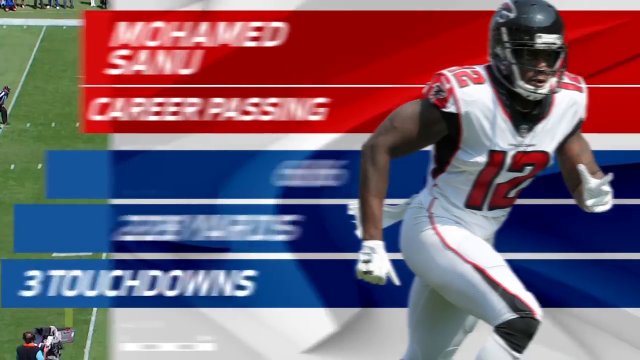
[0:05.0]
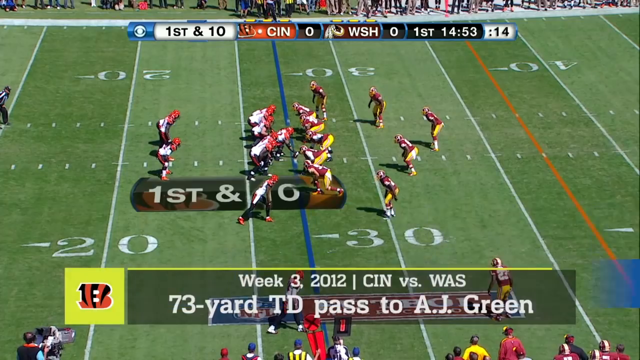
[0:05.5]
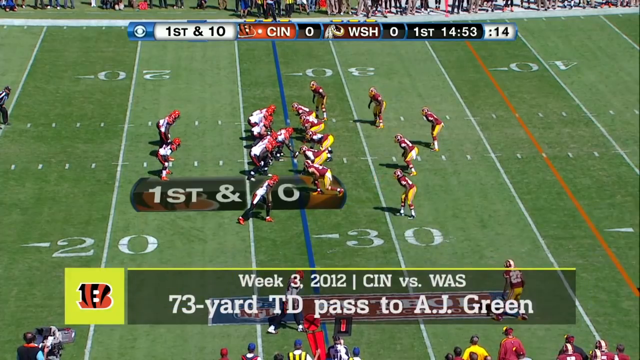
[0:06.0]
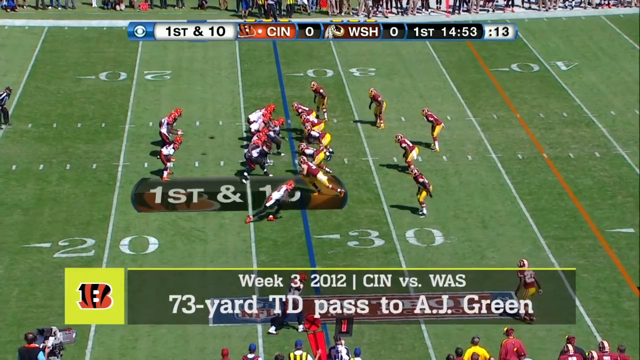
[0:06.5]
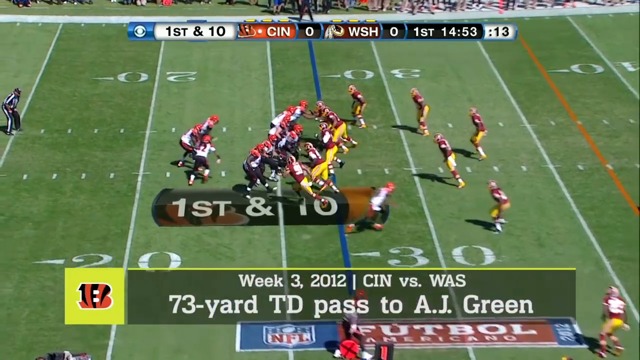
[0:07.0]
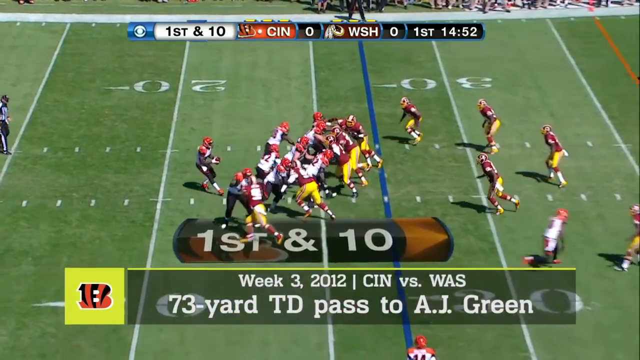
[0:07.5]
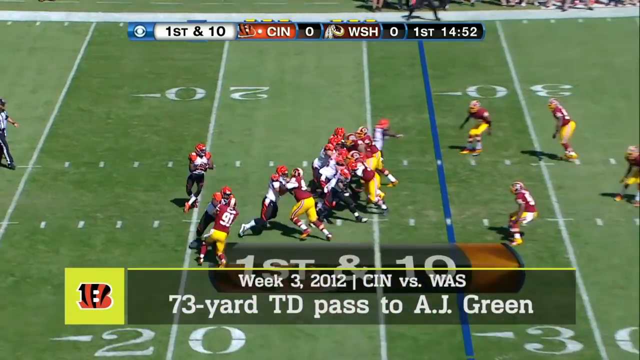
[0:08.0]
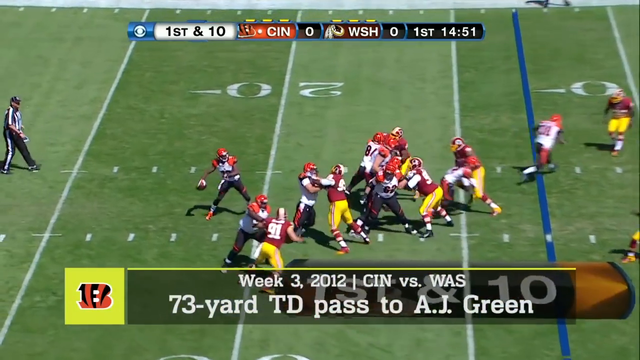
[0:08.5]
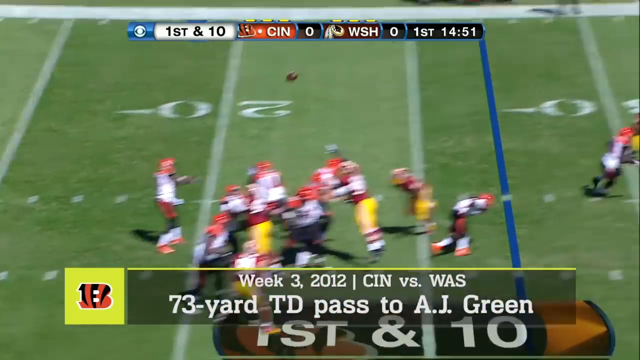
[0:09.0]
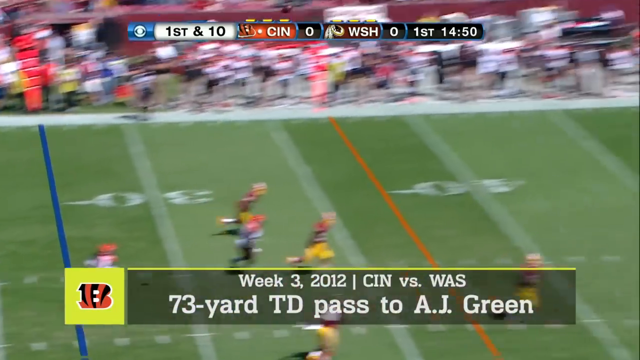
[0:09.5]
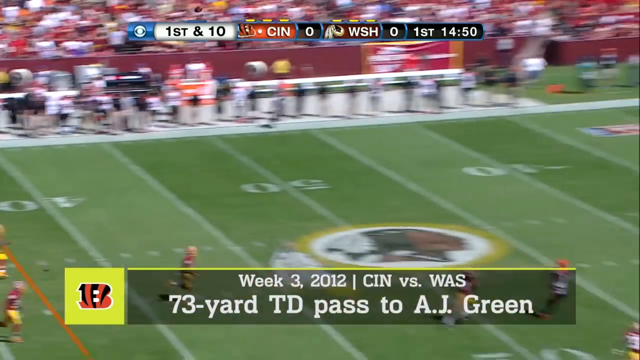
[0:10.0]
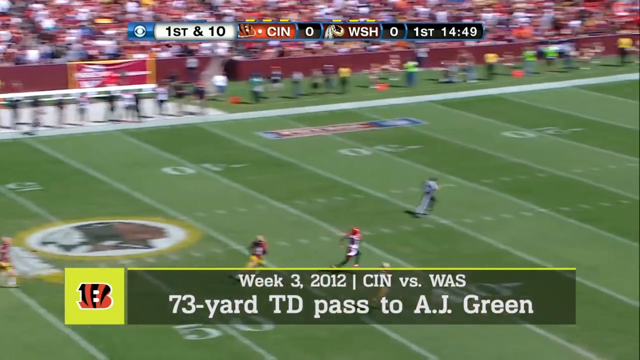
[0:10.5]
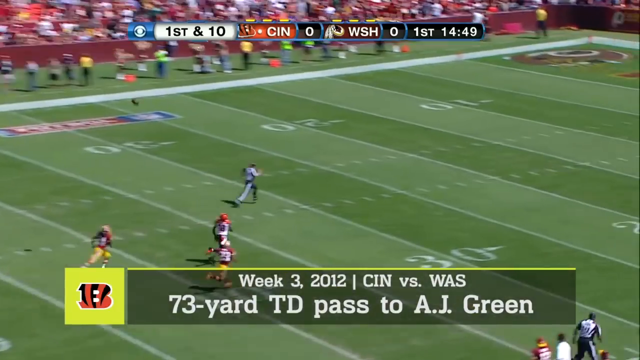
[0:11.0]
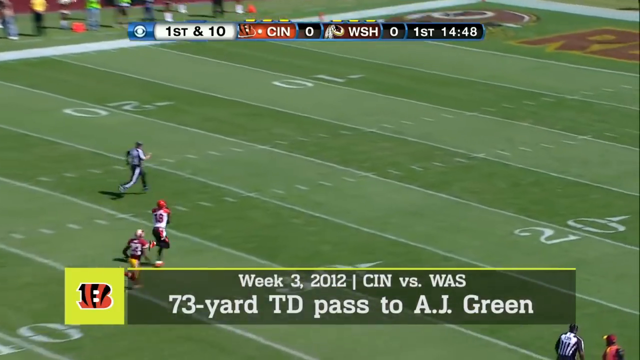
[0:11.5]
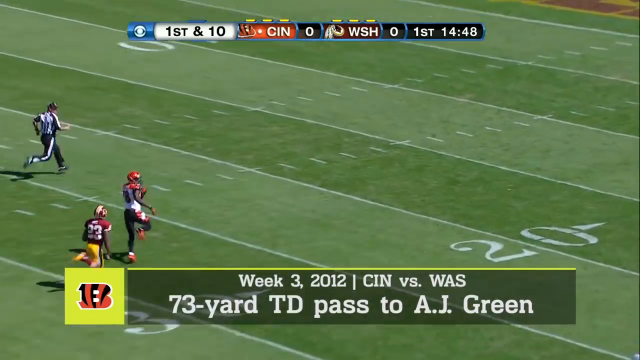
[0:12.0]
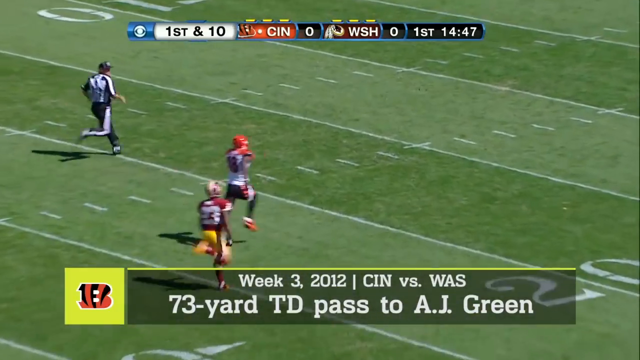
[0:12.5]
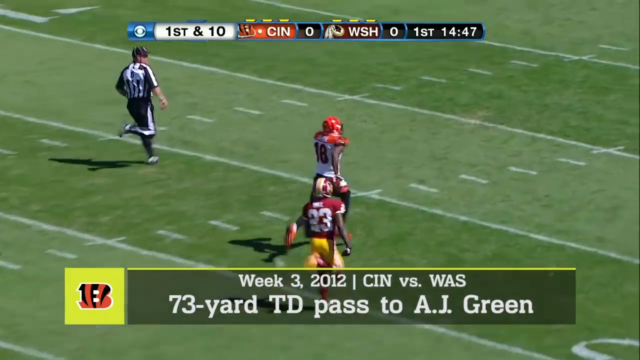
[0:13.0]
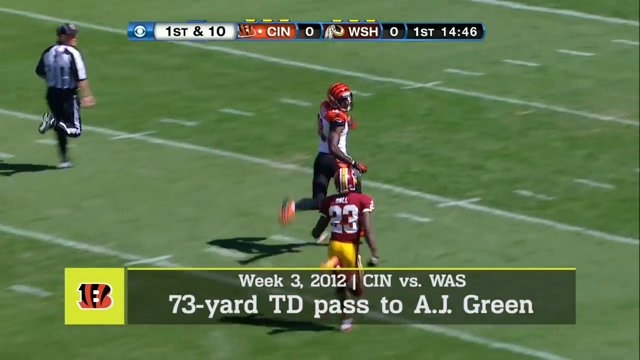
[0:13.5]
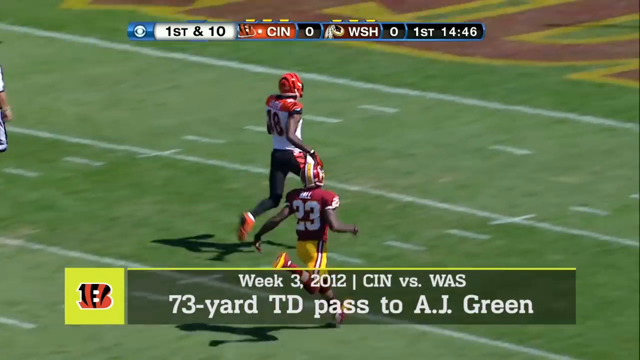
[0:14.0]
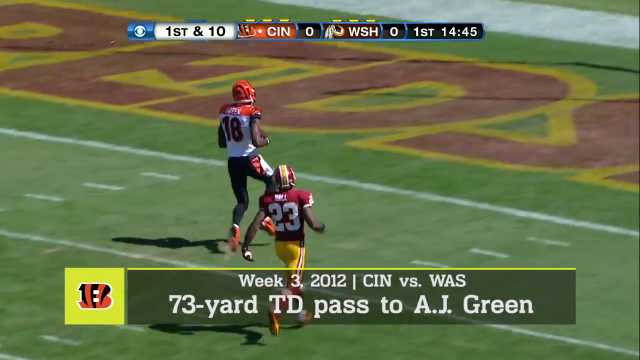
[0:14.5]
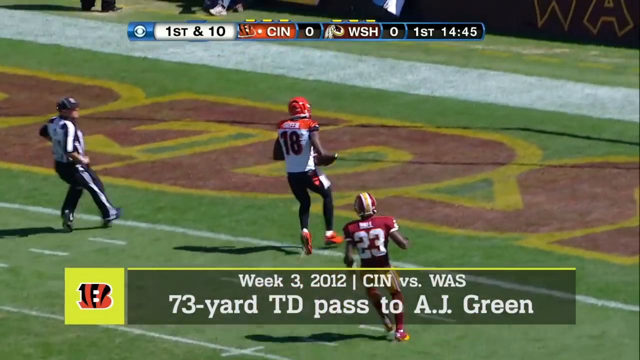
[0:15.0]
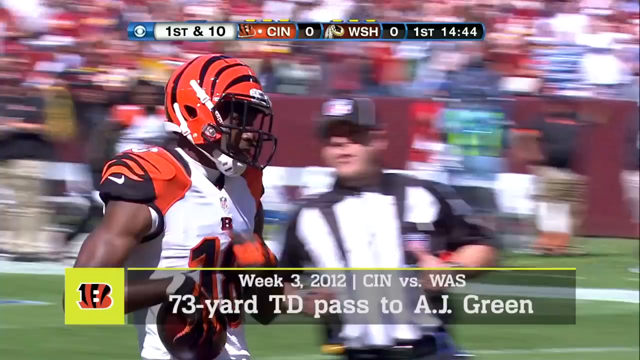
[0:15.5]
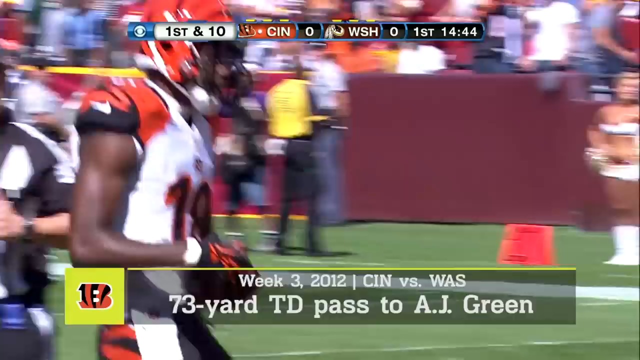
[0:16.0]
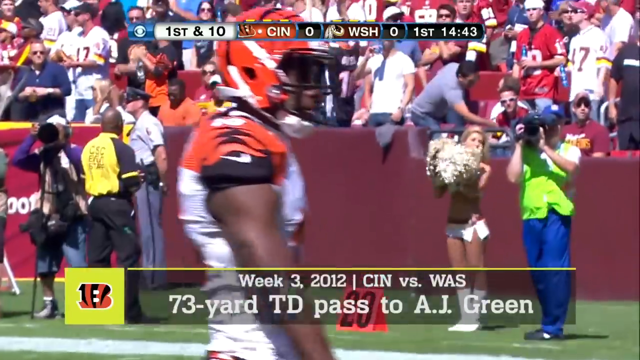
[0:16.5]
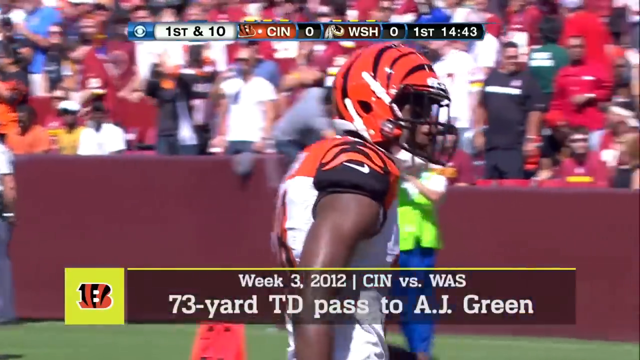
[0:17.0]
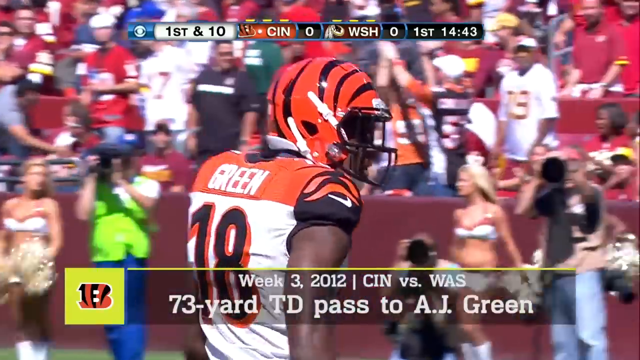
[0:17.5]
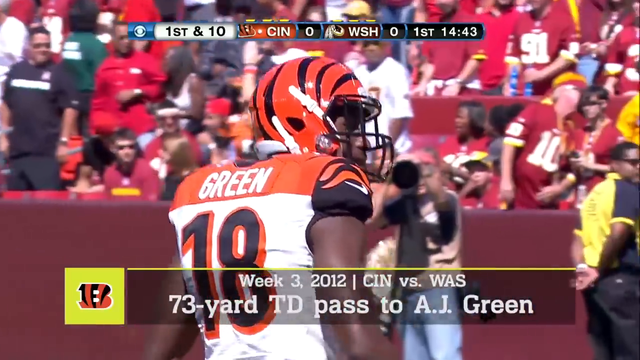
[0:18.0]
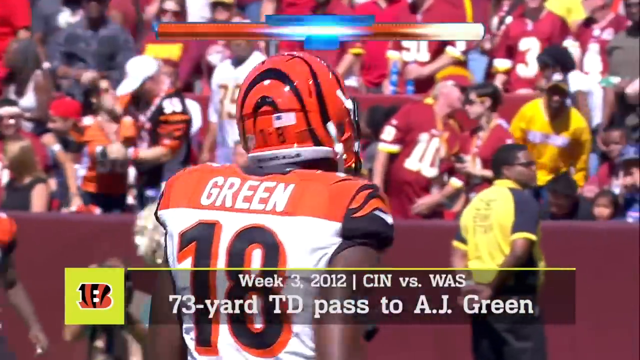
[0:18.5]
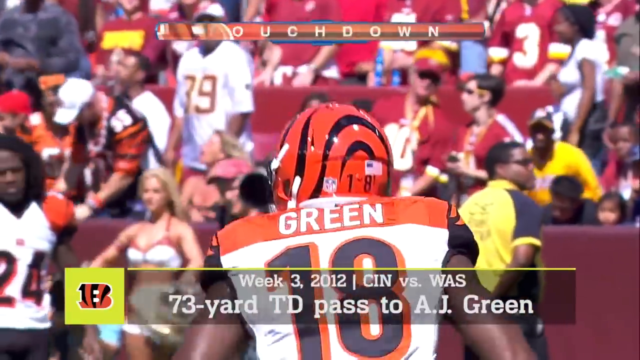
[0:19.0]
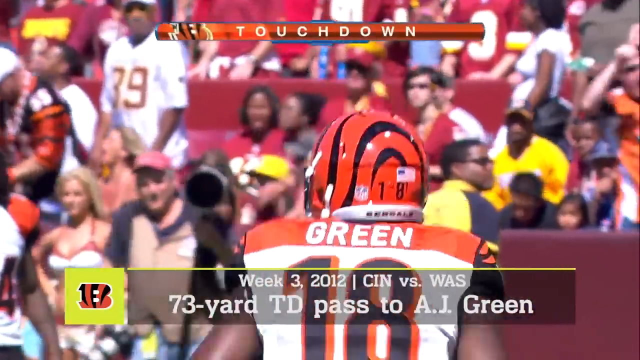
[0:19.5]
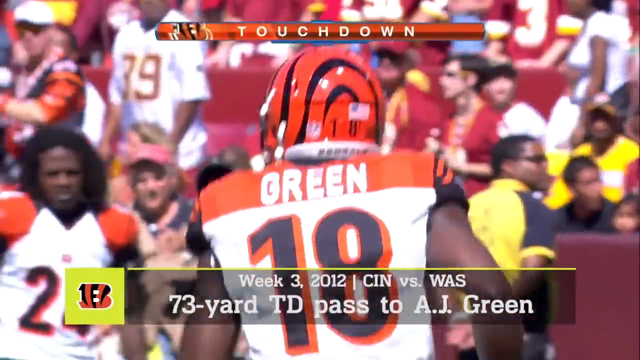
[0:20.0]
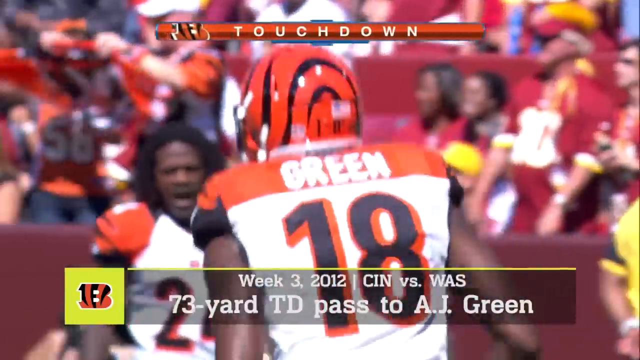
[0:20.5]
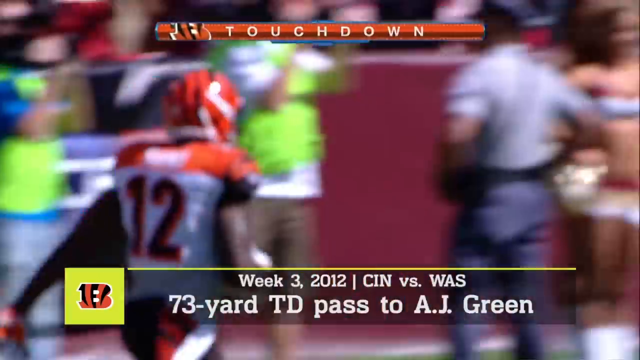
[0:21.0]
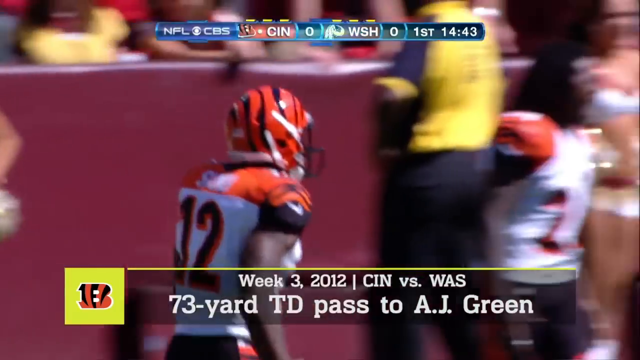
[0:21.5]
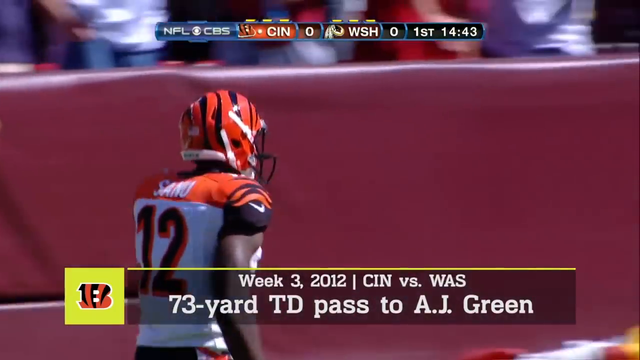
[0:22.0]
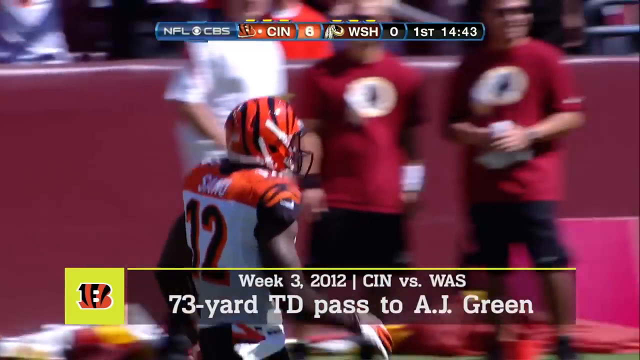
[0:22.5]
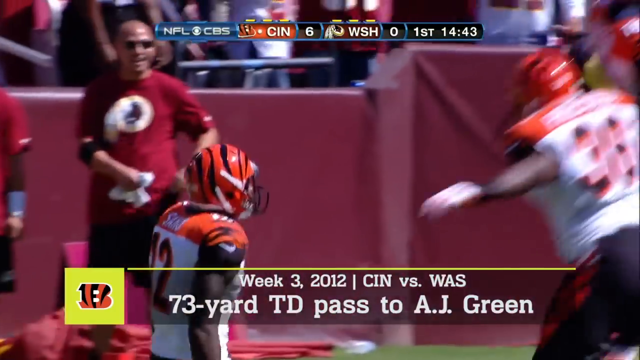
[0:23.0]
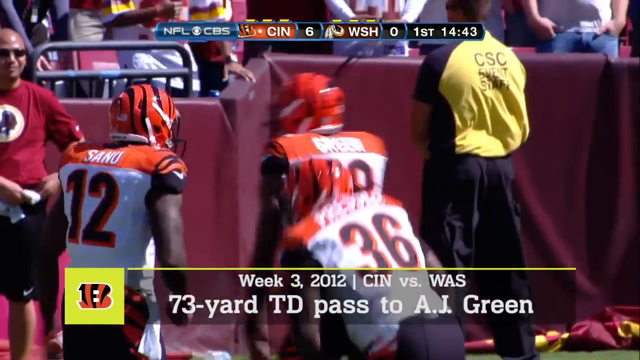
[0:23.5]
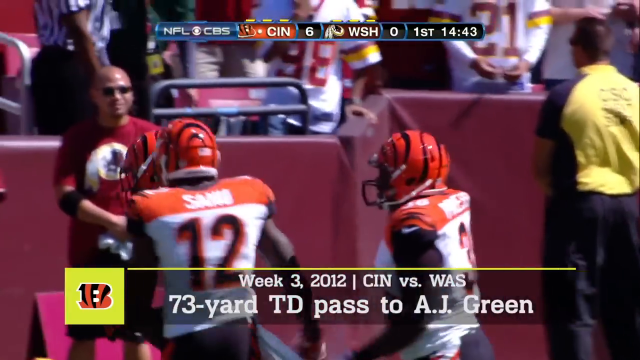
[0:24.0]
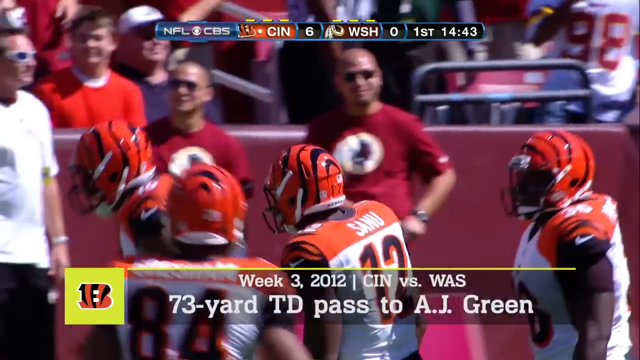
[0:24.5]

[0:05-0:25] A football game is in progress with two teams on the field. One team seems to wear white shirts, black tights and red helmets; the other wears yellow tights, burgundy jerseys and burgundy helmets. A "first and ten" graphic is on the screen, and a banner at the bottom reads "Week 3, 2012, Sin vs. W.A.S. 73-yard TD pass to A.J. Green". The ball is thrown a long distance to a wide receiver, who very likely catches it and makes it to the end zone. The receiver is Green, number 18, as printed on his jersey.